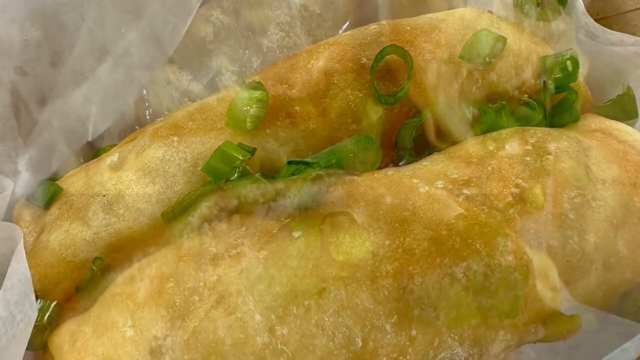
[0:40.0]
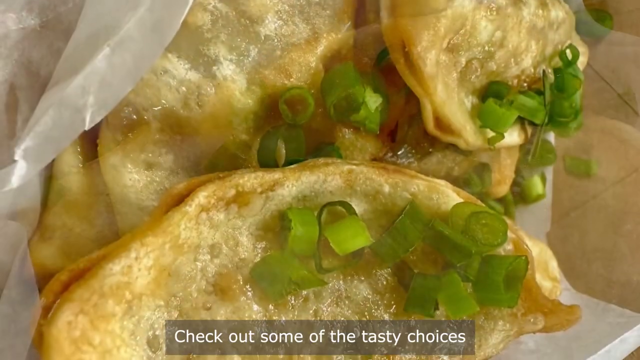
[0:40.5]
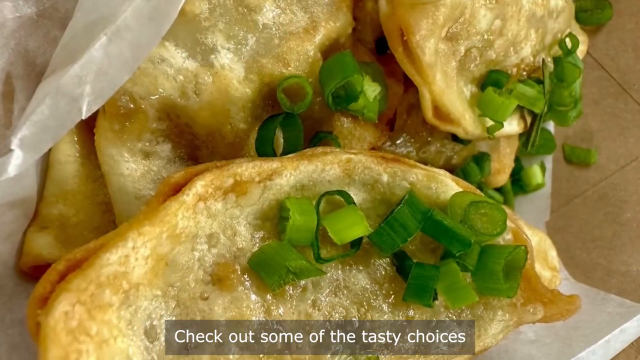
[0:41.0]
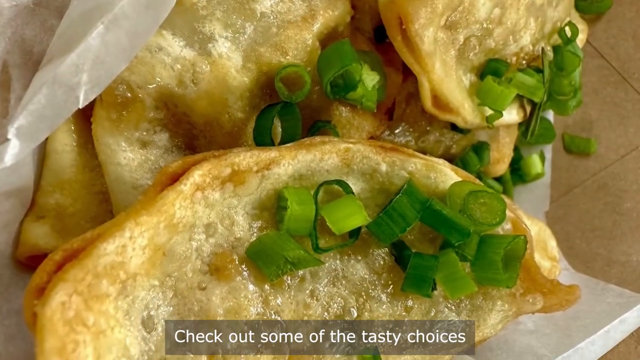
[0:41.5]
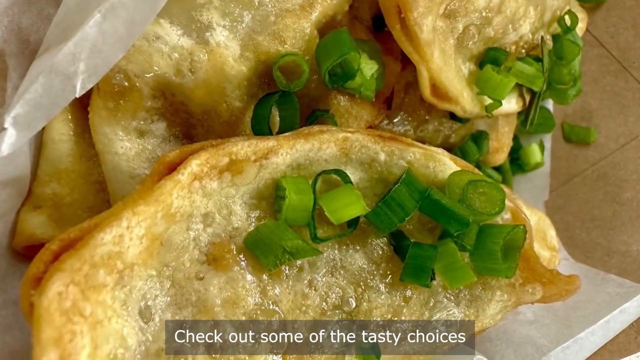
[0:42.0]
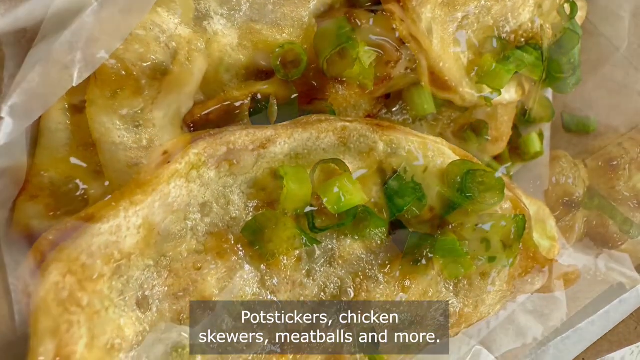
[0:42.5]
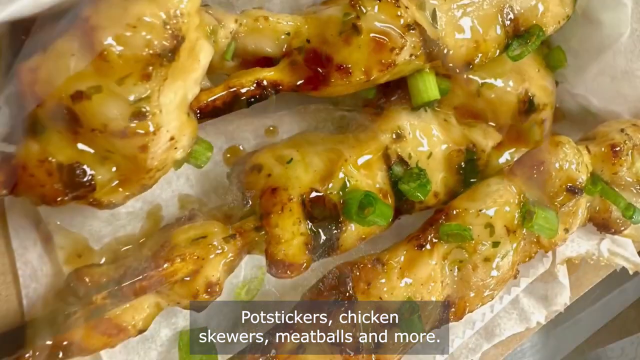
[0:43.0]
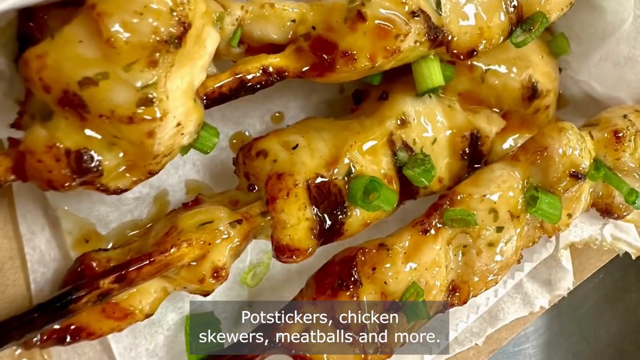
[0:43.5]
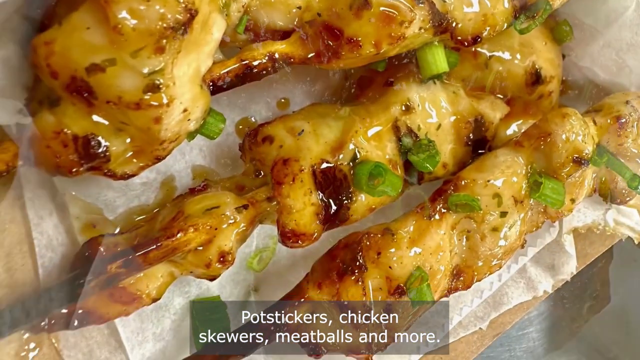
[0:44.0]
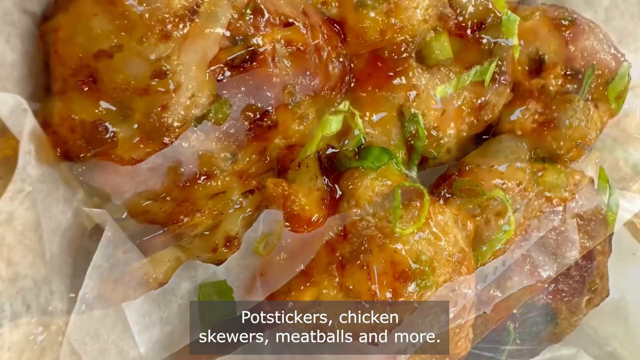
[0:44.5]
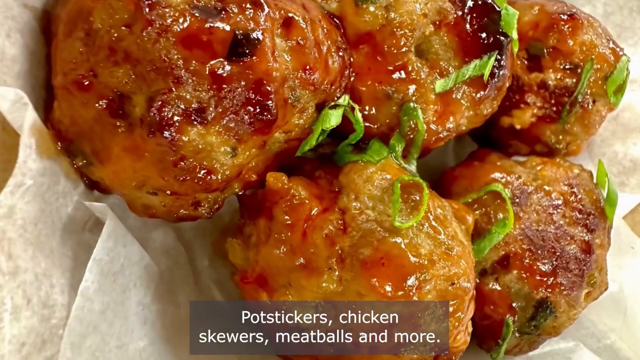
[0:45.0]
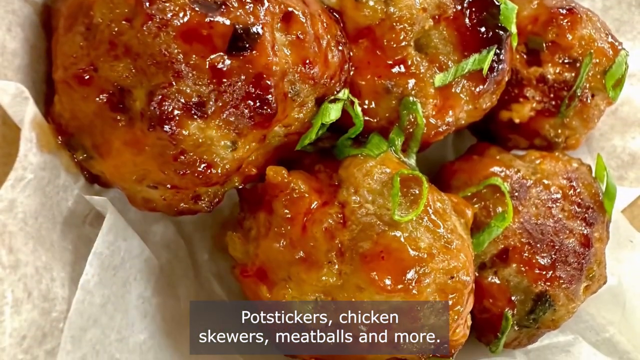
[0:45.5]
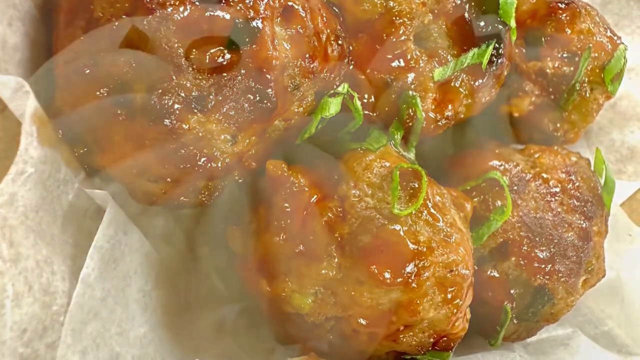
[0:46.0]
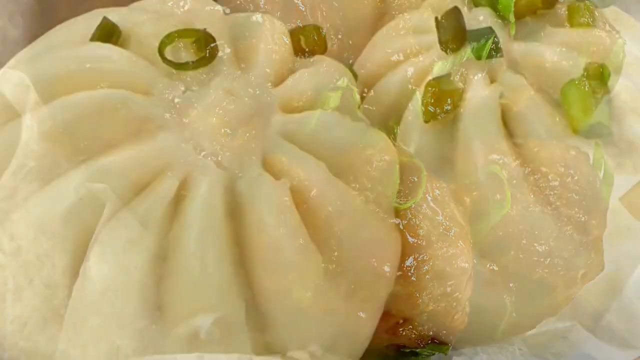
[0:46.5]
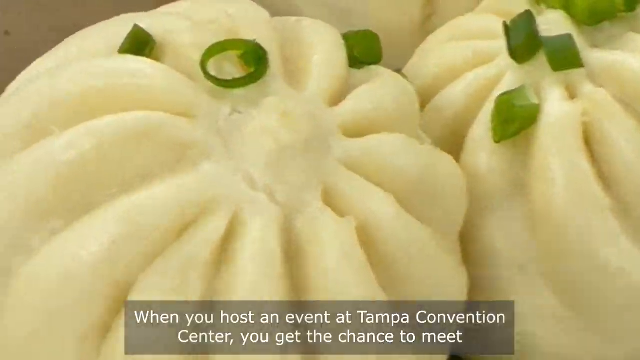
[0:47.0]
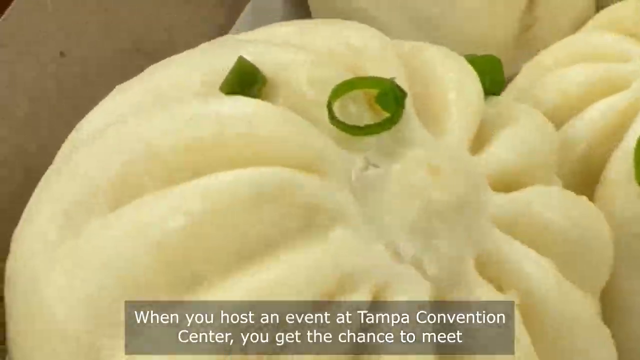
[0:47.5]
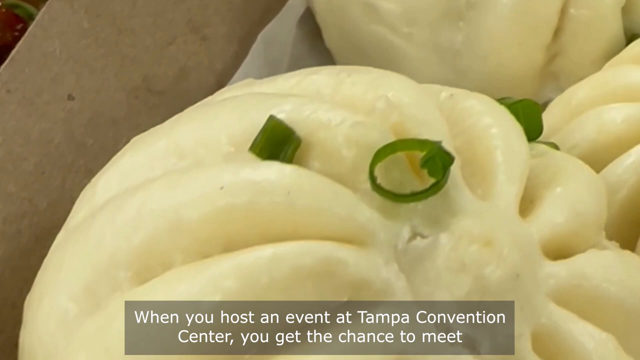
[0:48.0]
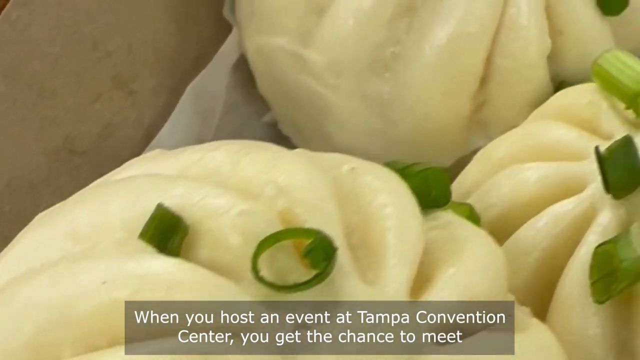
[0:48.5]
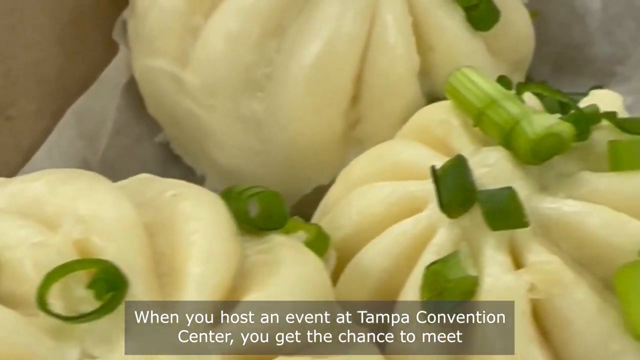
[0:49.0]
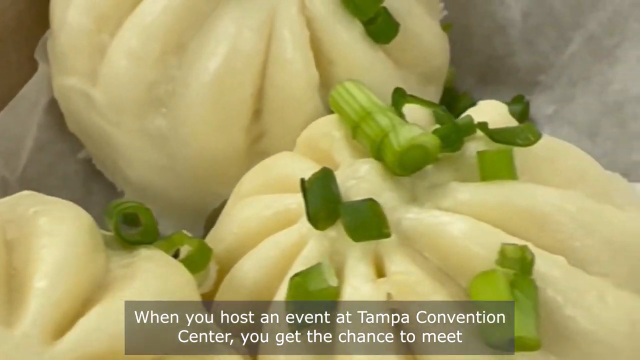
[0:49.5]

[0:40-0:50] Text reads "Please see the complete disclaimer at https://sites.google.com". A close-up shows a fried wonton-type item with chopped green onions on top, and text below lists "potstickers, chicken skewers, meatballs, and more". Further text reads "when you host an event at the Tampa Convention Center", "Check out some of the tasty choices" and "You get the chance to meet with the culinary team." A close-up of the potstickers shows them shiny and kind of greasy, not looking very appealing. The close-ups are very tight.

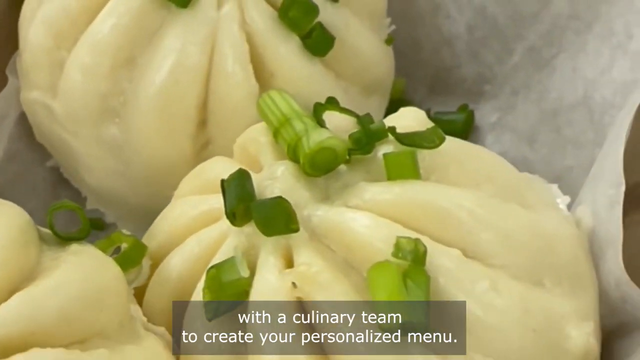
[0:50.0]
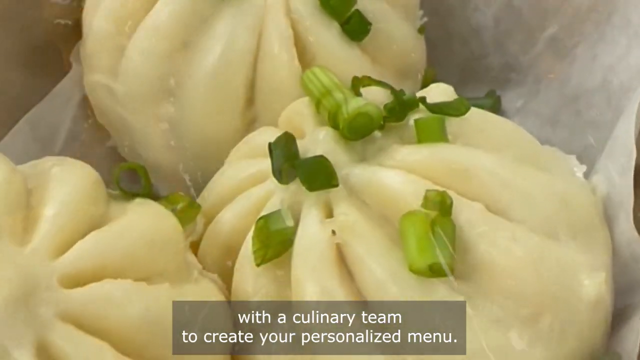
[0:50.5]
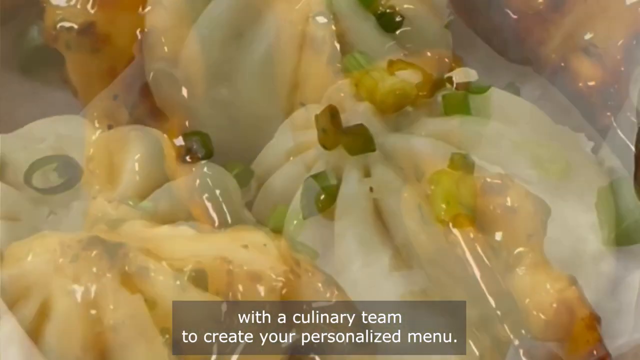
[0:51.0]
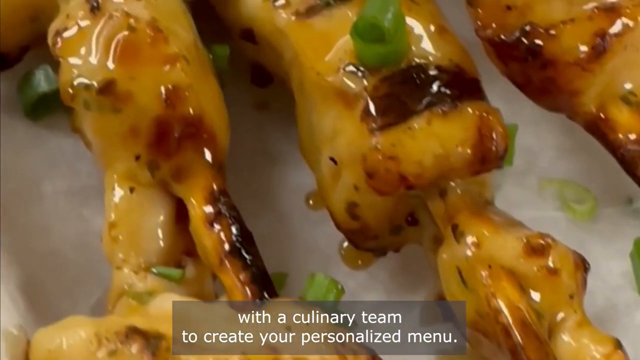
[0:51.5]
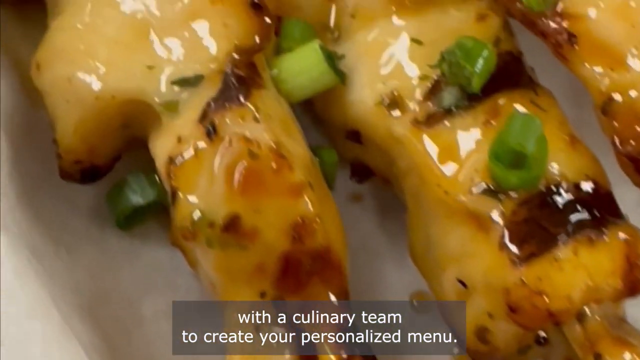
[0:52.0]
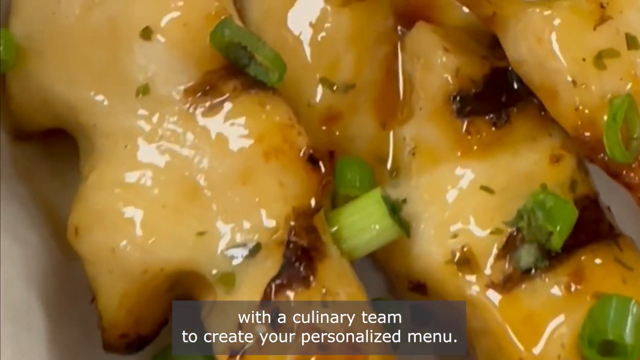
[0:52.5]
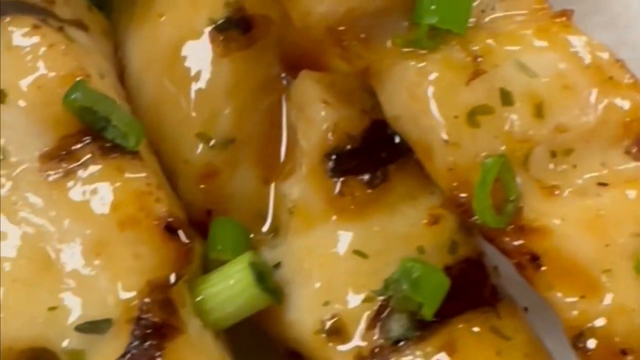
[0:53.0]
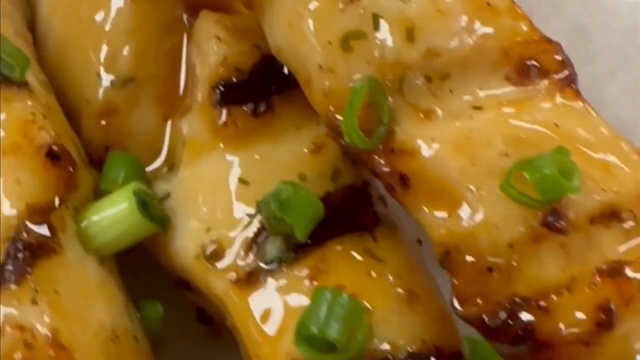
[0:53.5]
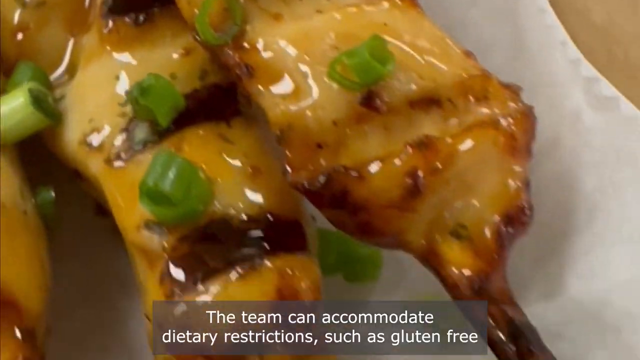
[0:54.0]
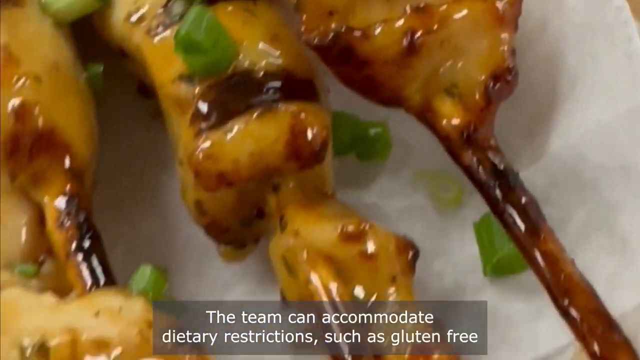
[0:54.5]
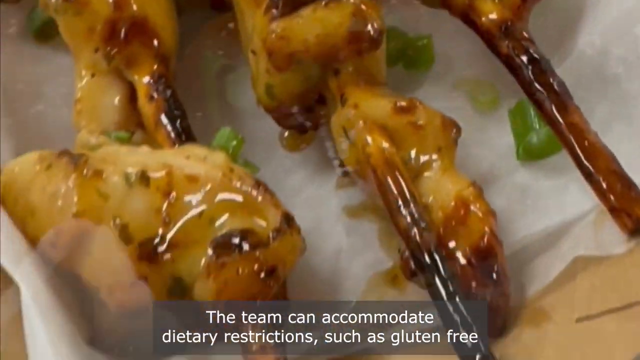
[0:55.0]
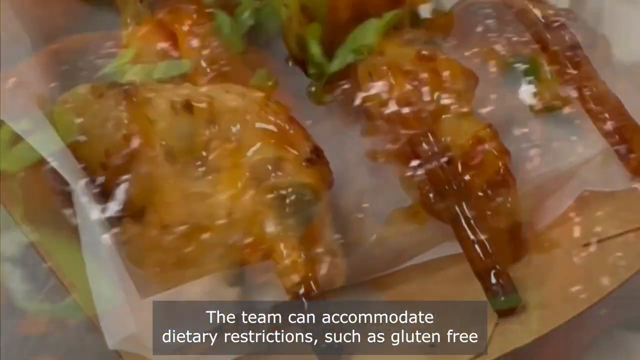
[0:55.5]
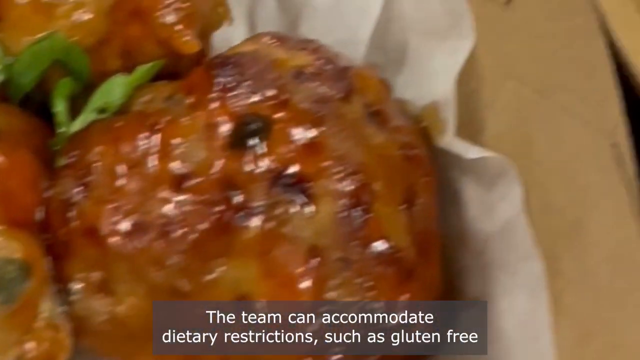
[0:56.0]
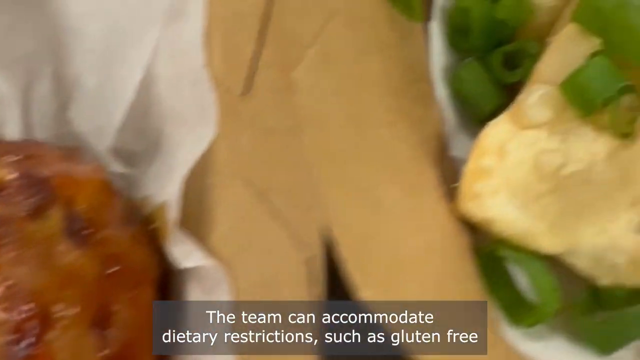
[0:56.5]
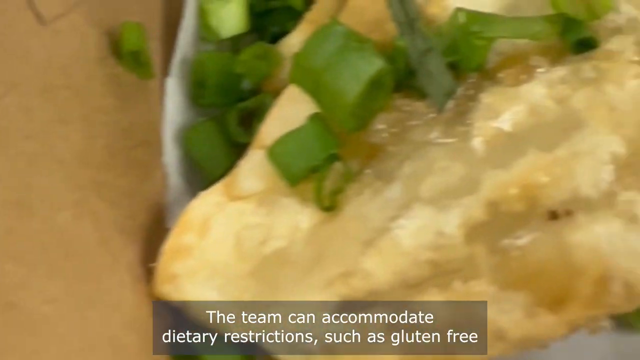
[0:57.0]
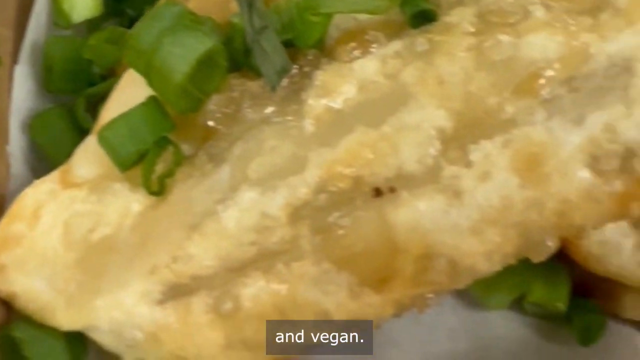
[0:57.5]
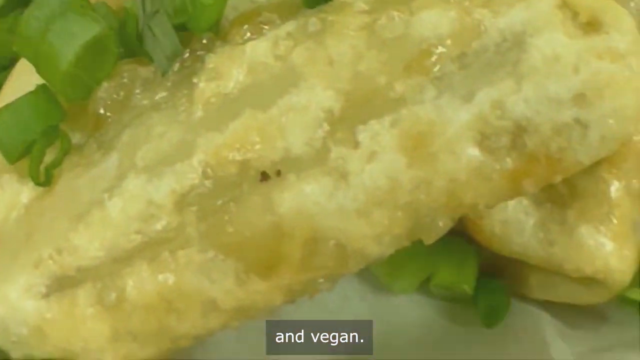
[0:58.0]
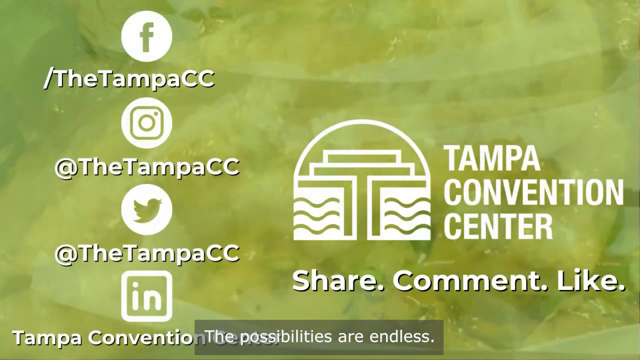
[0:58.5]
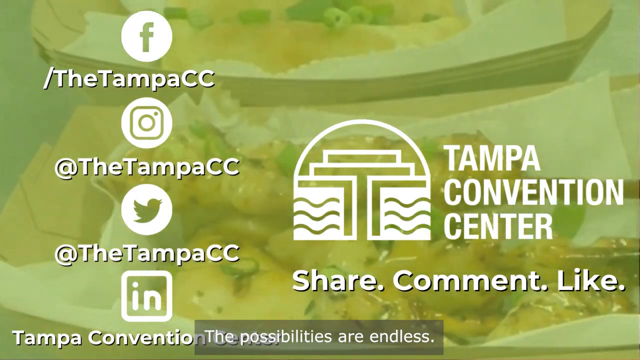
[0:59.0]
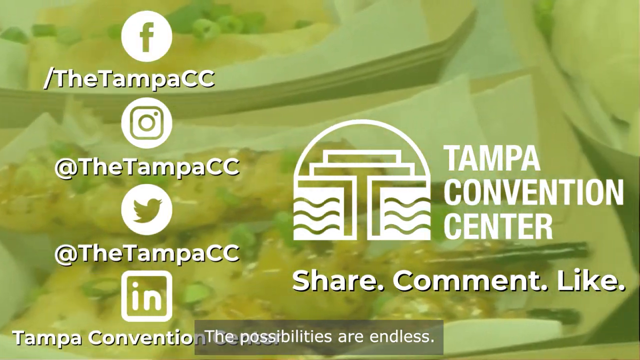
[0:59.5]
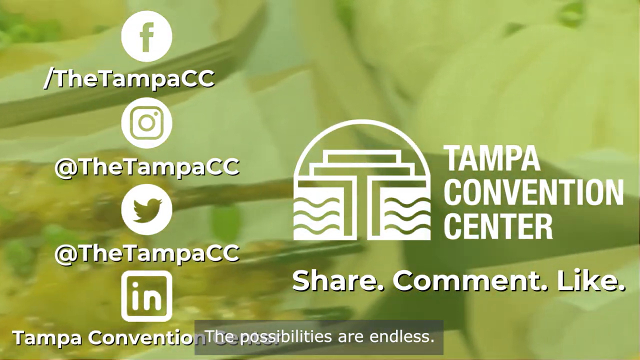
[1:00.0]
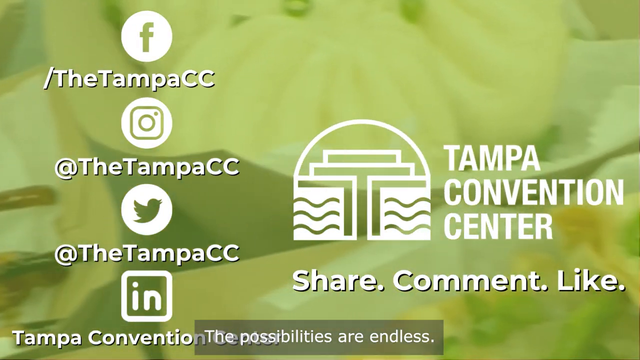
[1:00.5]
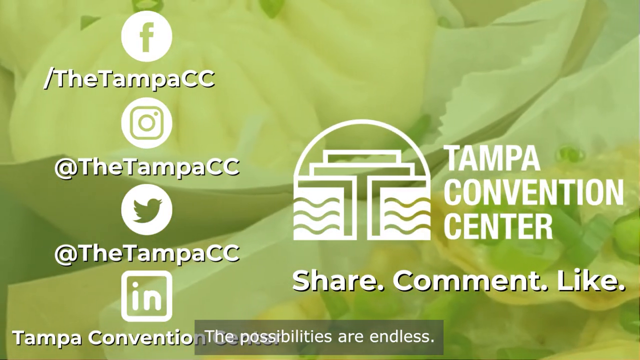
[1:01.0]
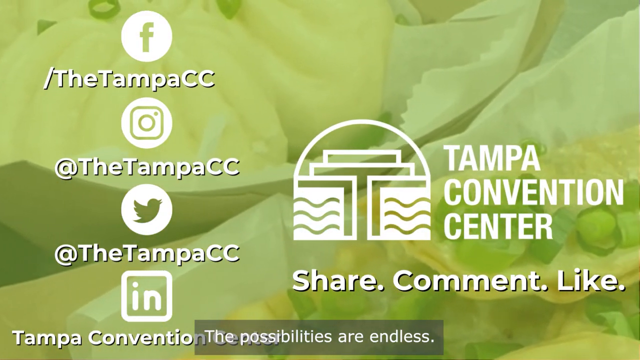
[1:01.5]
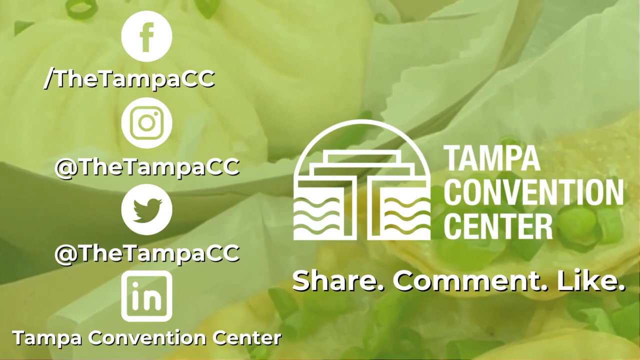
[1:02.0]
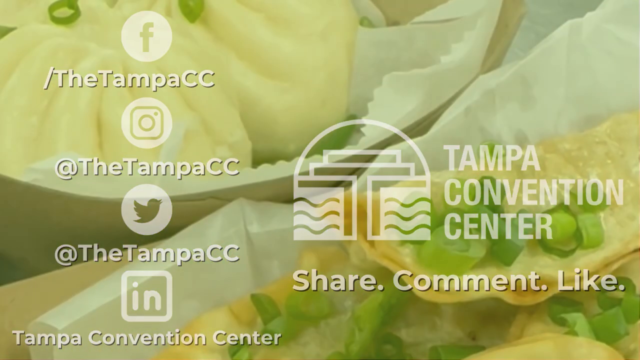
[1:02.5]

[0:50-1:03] The satay appear in extreme close-up, with text below stating that the team can accommodate dietary restrictions "such as gluten-free and vegan". A lot of text then appears: a Facebook logo with "/the Tampa CC", then an Instagram logo with "@the Tampa CC", and below that a Twitter logo with "@the Tampa CC". A Tampa Convention Center logo appears to the right, with "share comment like" below it. The background behind the logo is green.